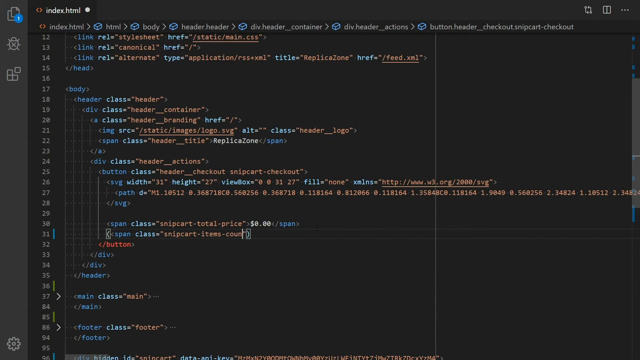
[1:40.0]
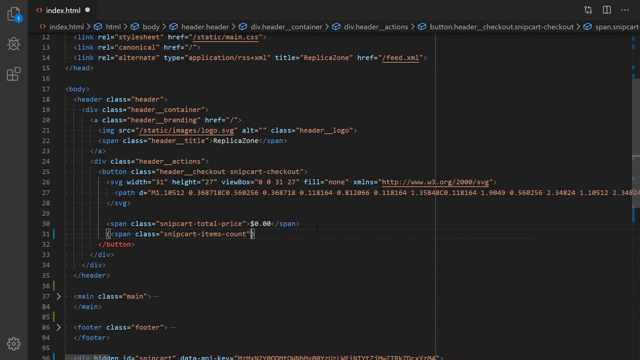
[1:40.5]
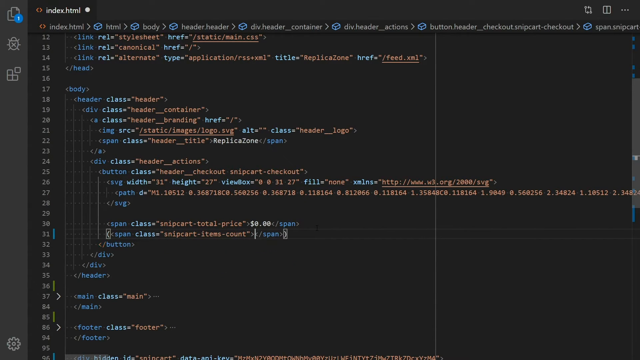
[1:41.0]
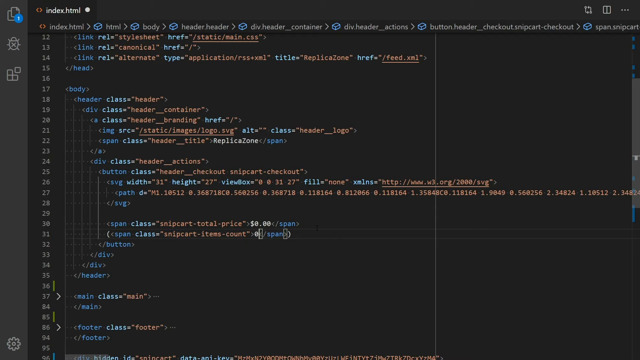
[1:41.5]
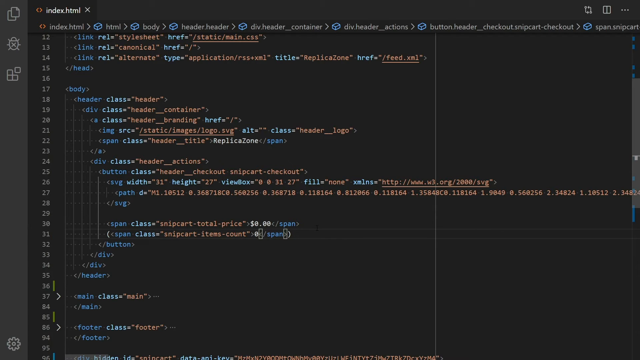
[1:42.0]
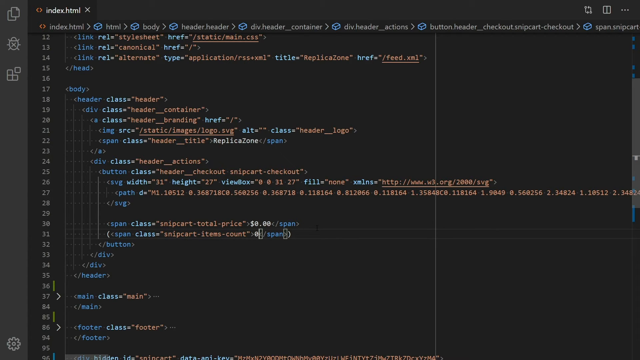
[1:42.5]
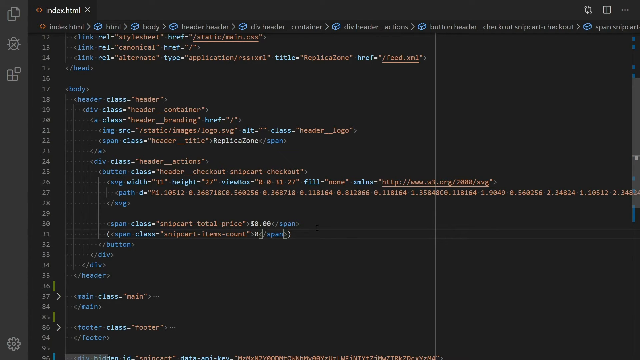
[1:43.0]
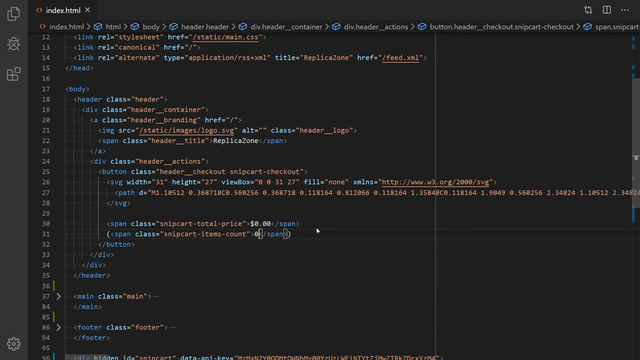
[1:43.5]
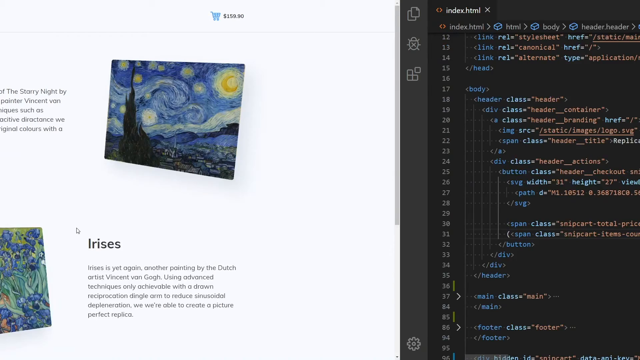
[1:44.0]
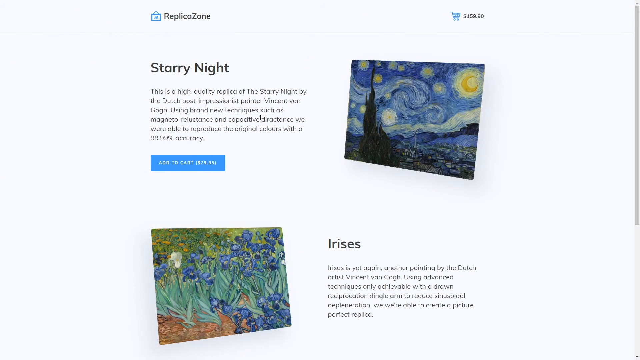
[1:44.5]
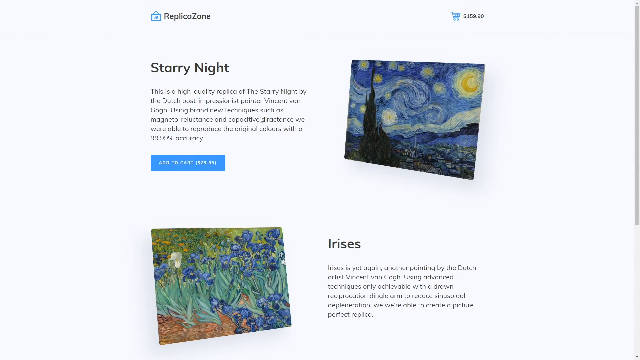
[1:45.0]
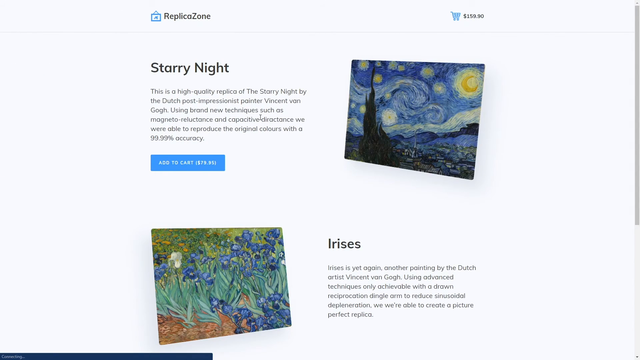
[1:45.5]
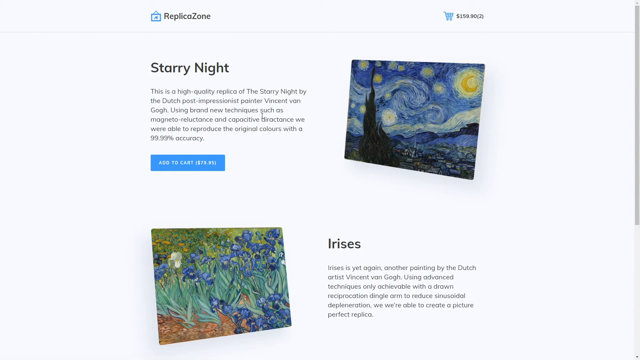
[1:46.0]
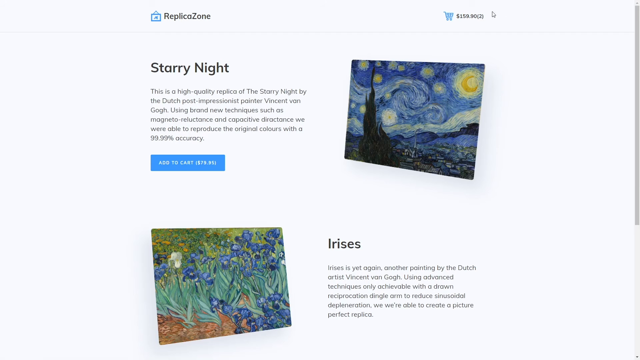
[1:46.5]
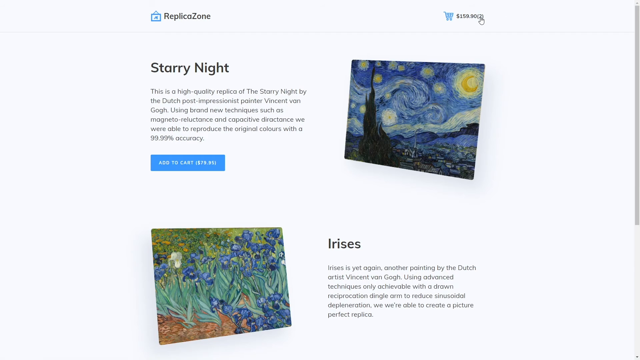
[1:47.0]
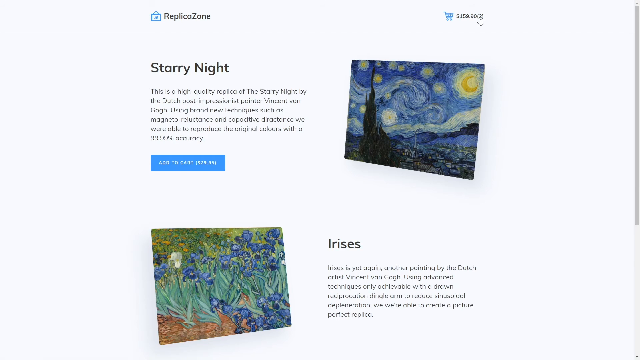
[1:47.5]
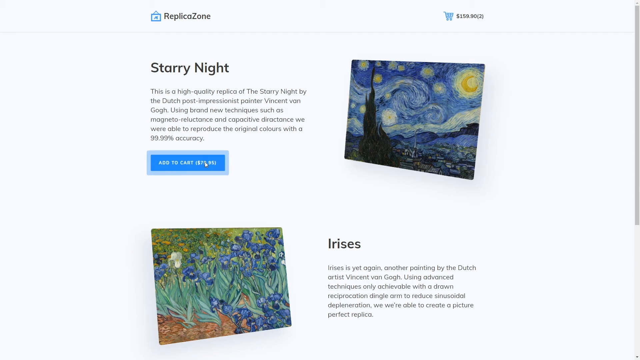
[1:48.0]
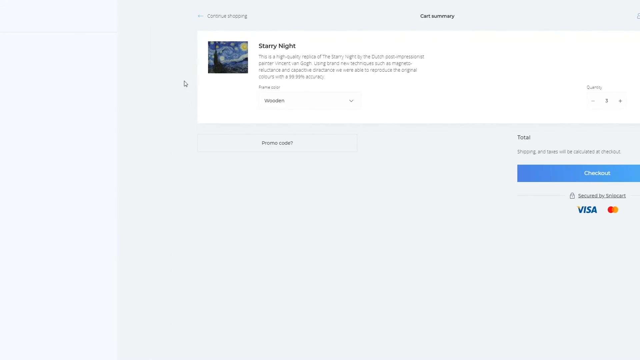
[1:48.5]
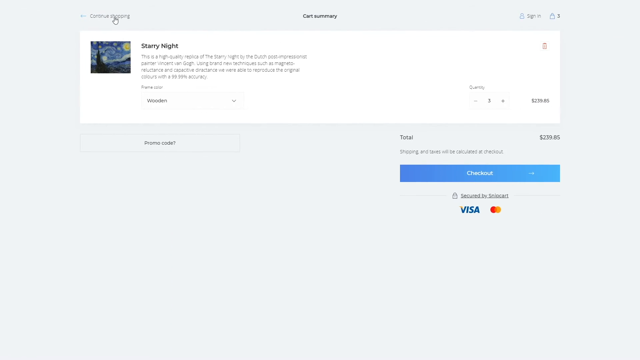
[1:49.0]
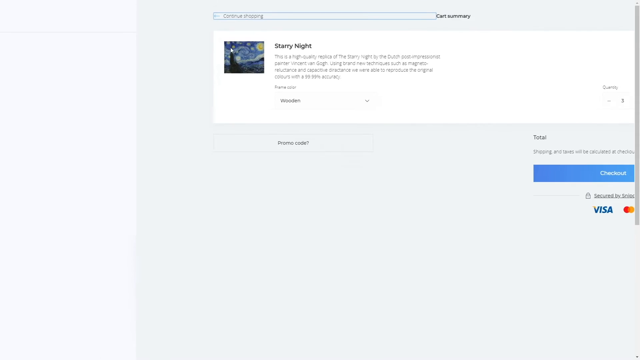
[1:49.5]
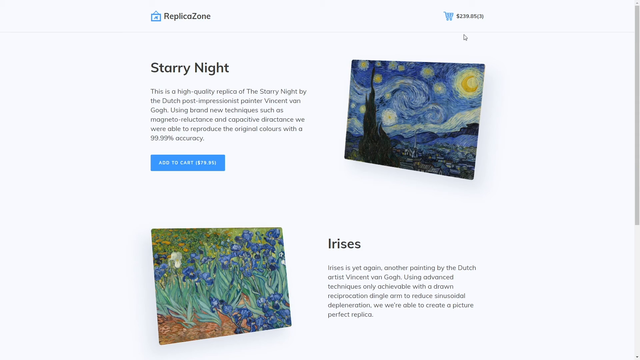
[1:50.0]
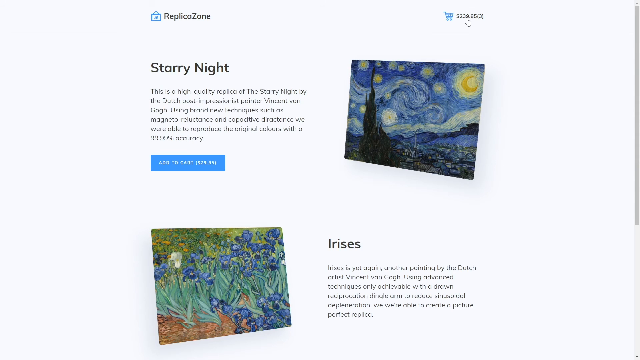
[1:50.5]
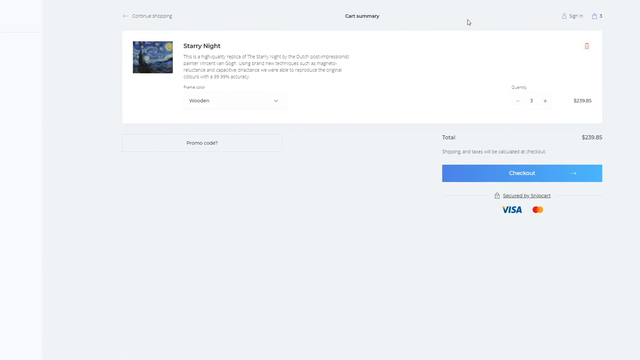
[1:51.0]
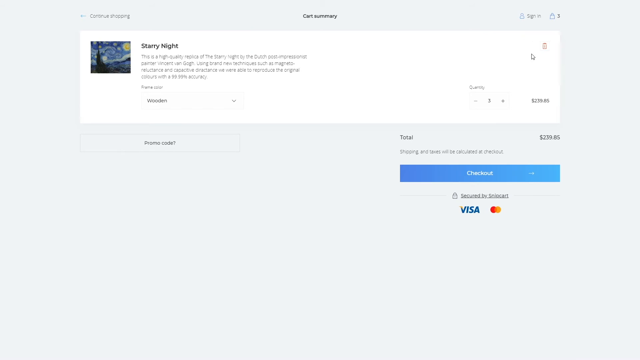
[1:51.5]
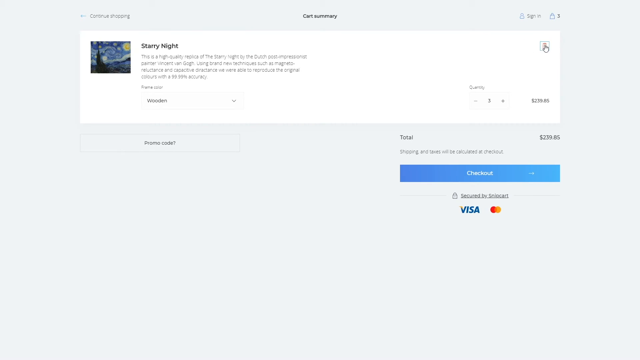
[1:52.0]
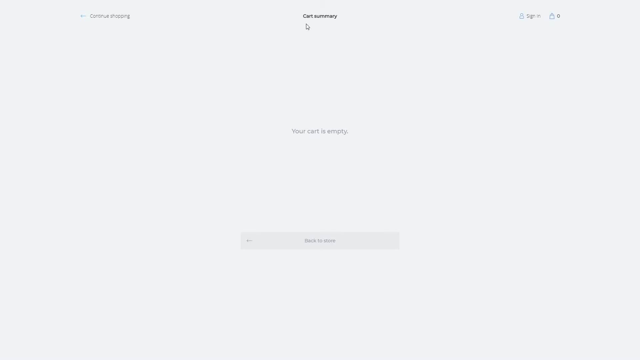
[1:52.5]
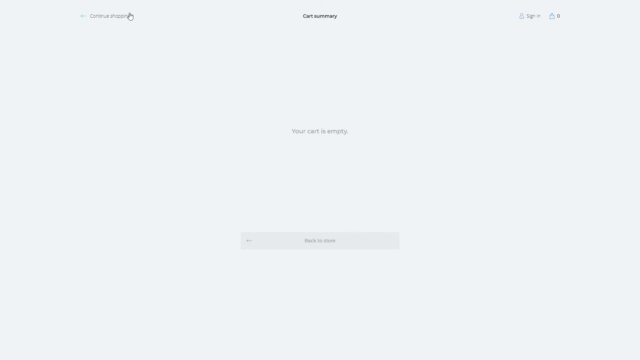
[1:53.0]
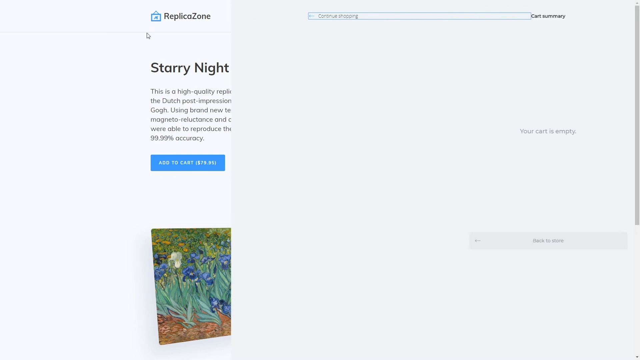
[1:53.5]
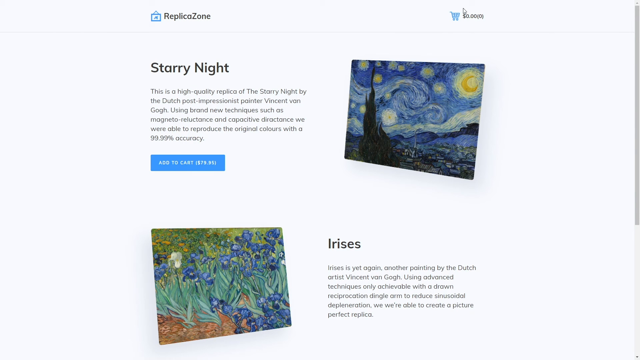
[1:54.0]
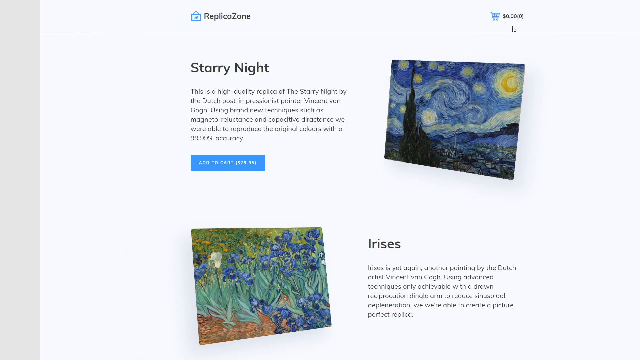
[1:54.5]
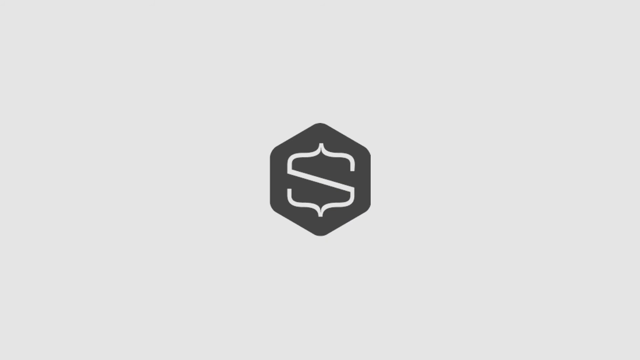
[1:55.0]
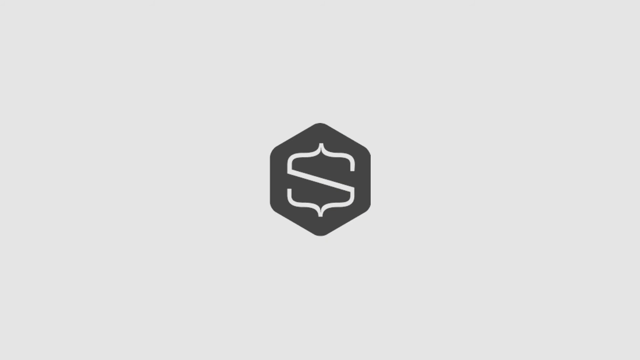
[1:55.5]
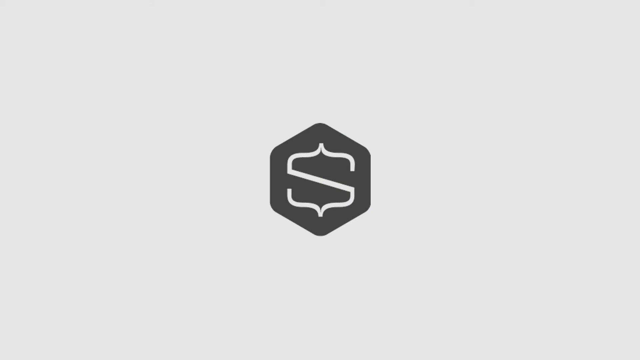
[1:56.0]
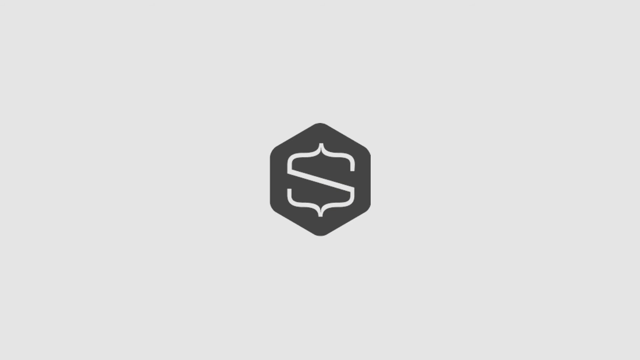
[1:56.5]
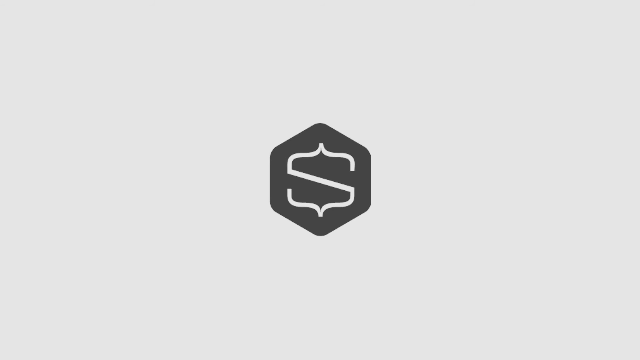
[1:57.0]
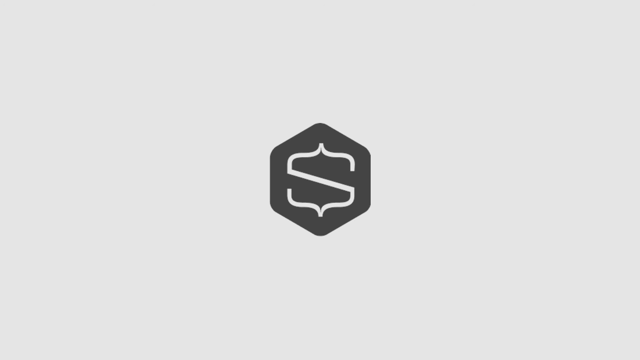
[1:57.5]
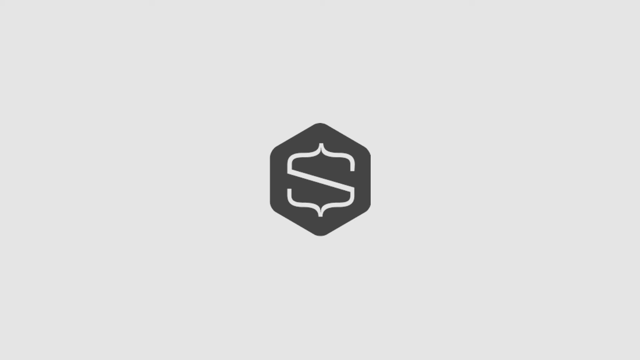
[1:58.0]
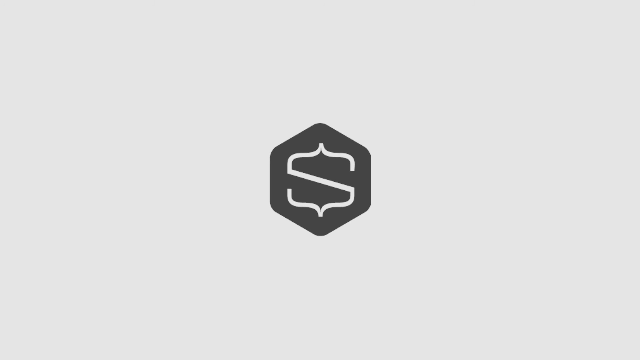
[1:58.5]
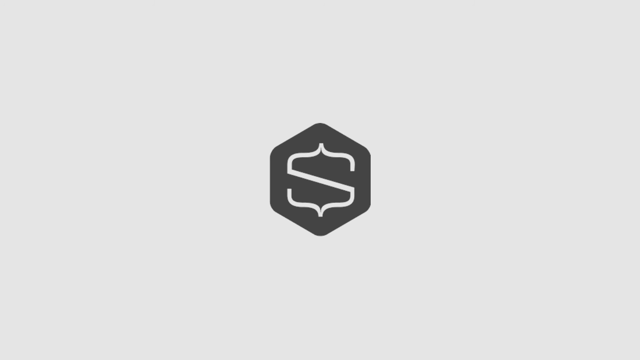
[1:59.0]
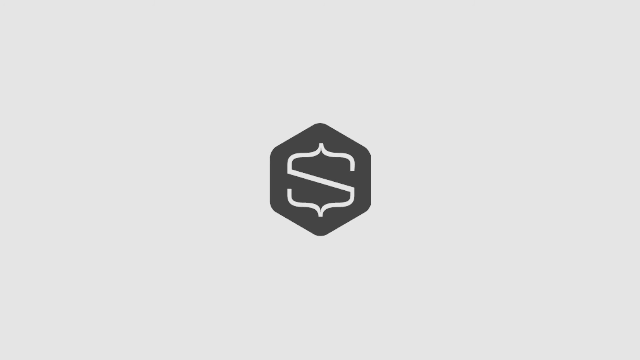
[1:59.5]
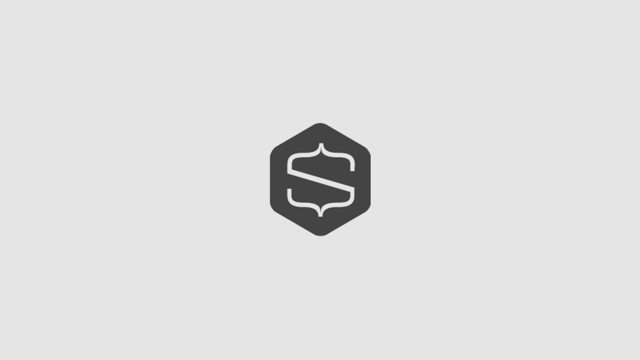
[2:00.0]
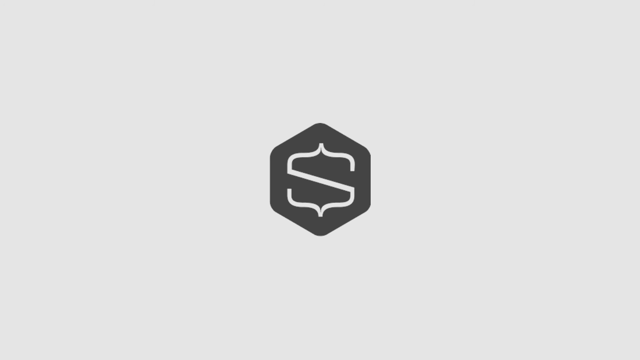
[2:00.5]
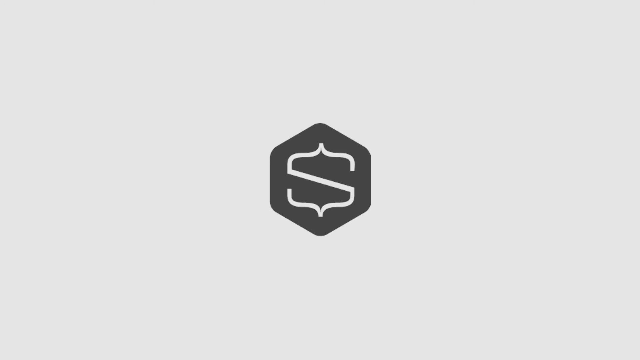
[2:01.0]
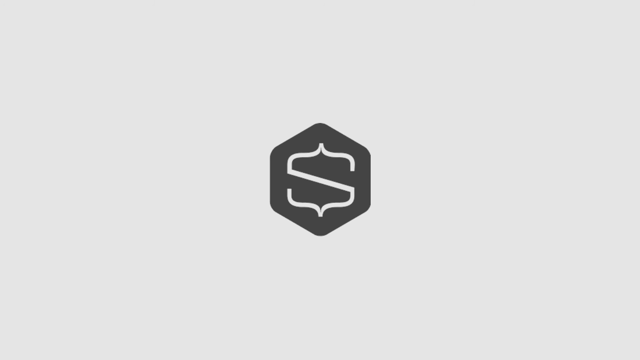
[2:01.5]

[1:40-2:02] The scene begins on the black page where the code is being changed, with the cursor still blinking. The view goes back to the sales page and then to the shopping cart page, and the hand cursor moves quickly between the shopping cart icon on the sales page and the shopping cart page, changing rapidly from one to the next. At the very end, the video returns to the logo of the original website: an S made of two brackets and a diagonal bar on a gray six-sided geometric shape. The brackets and logo are white; the two brackets face each other on their sides and the diagonal bar connects them. The video is a tutorial showing how to make changes, such as to price and description, on a shopping site where items are for sale.